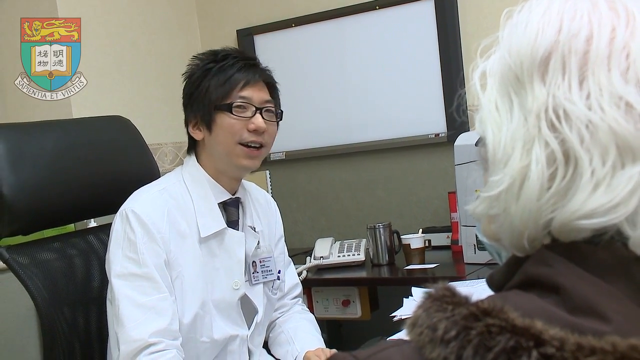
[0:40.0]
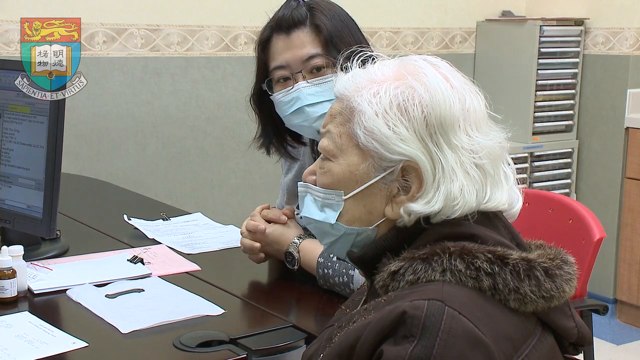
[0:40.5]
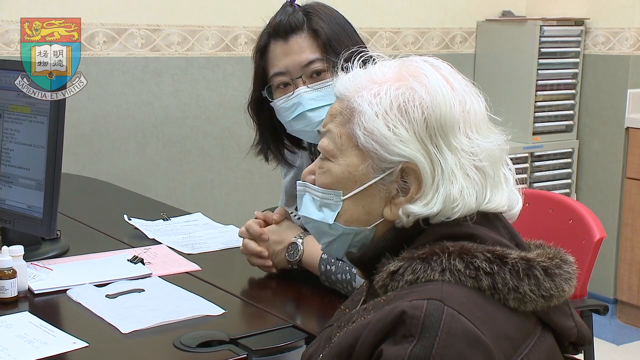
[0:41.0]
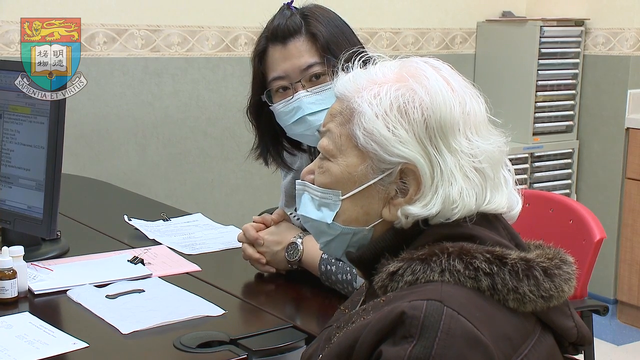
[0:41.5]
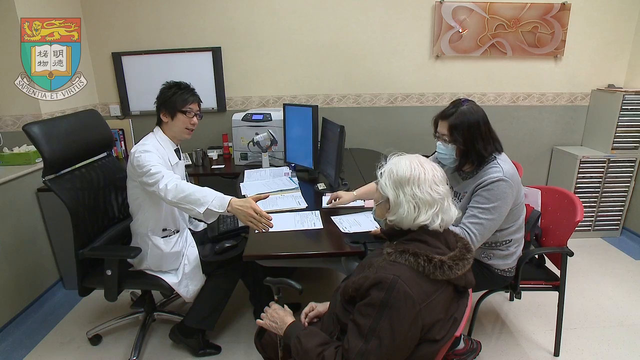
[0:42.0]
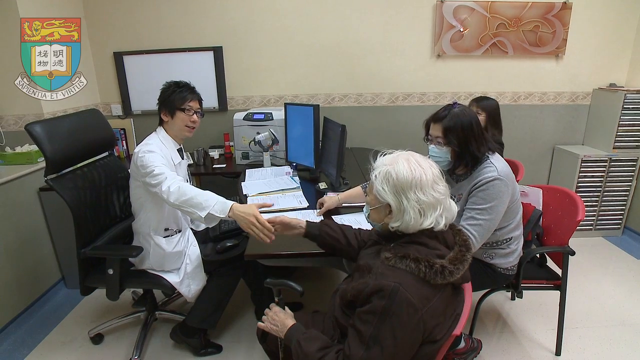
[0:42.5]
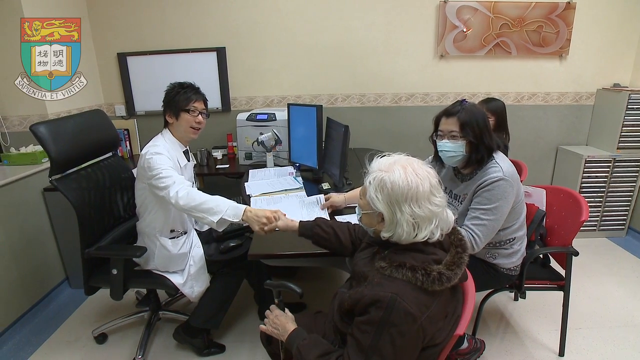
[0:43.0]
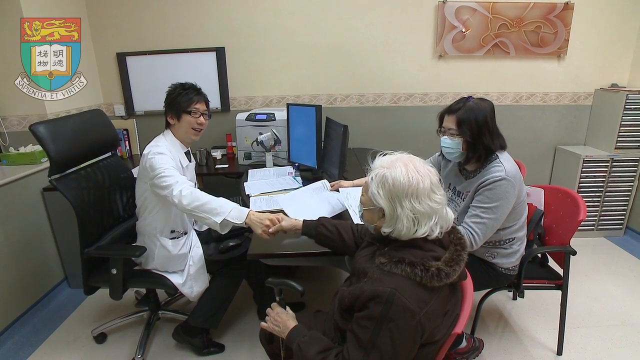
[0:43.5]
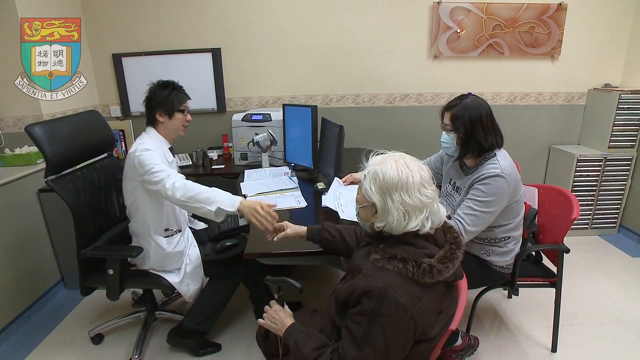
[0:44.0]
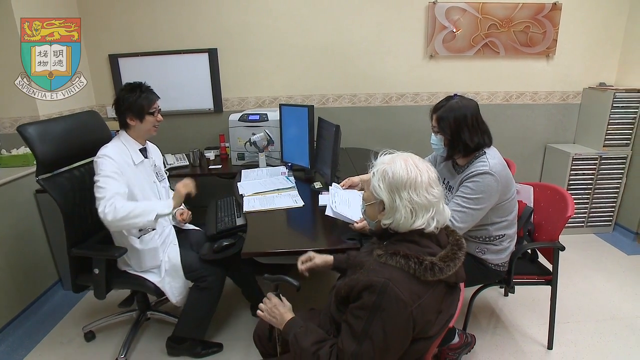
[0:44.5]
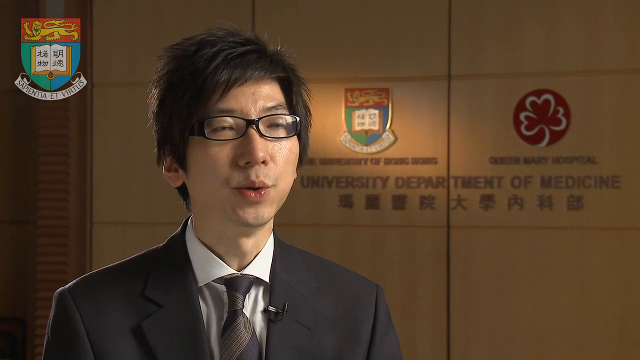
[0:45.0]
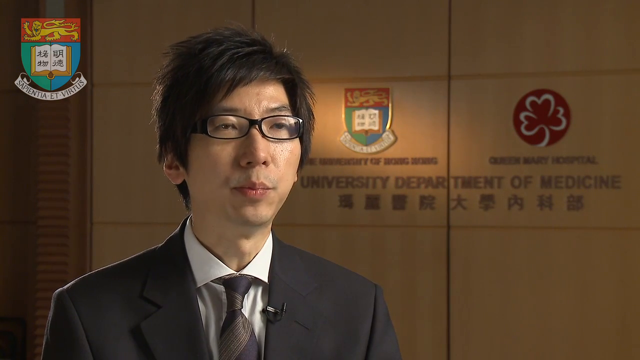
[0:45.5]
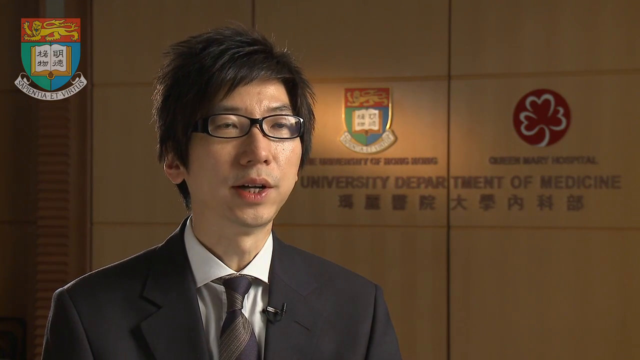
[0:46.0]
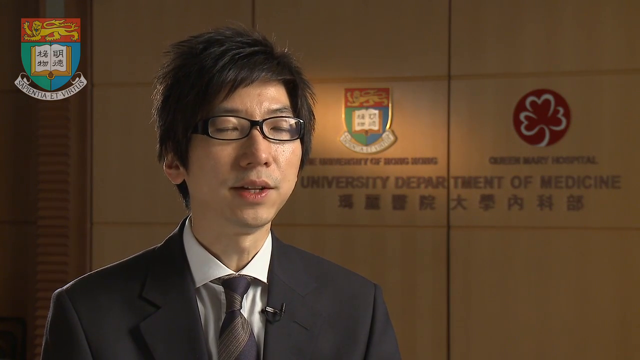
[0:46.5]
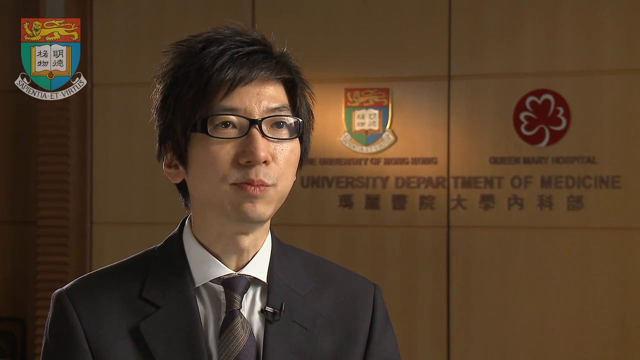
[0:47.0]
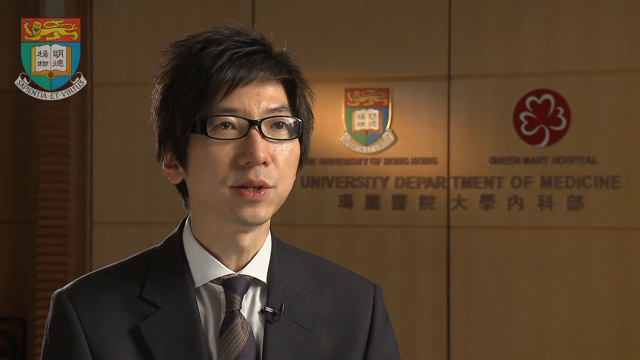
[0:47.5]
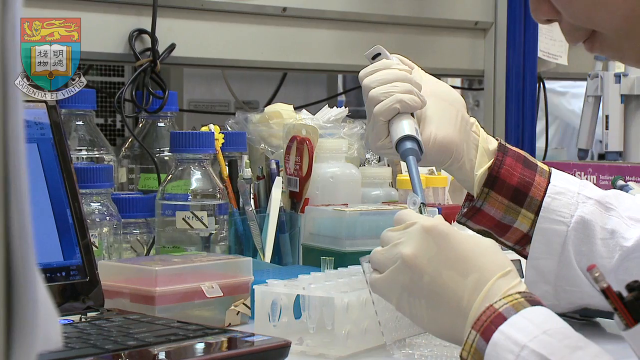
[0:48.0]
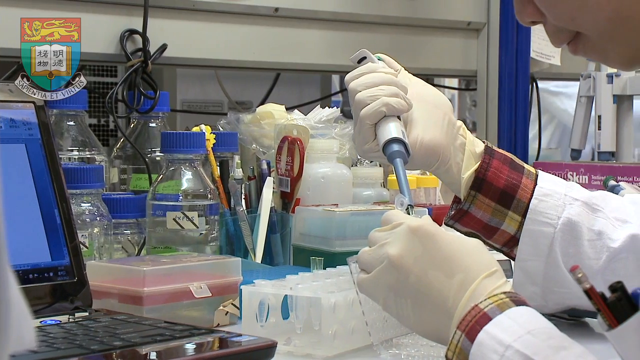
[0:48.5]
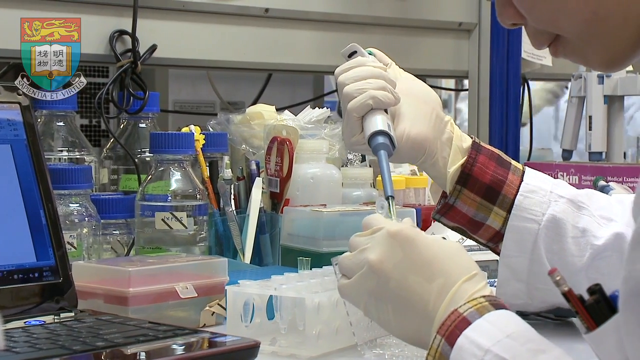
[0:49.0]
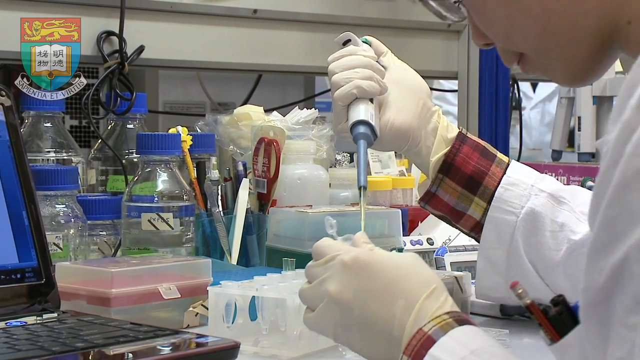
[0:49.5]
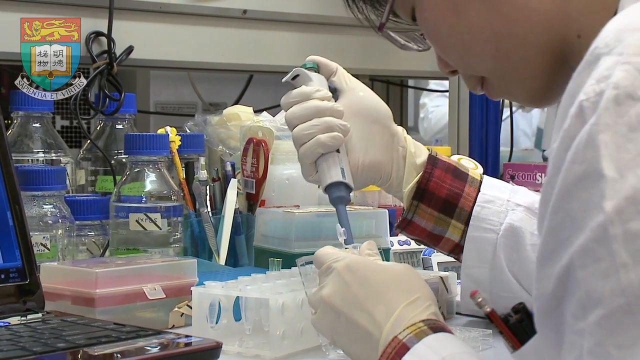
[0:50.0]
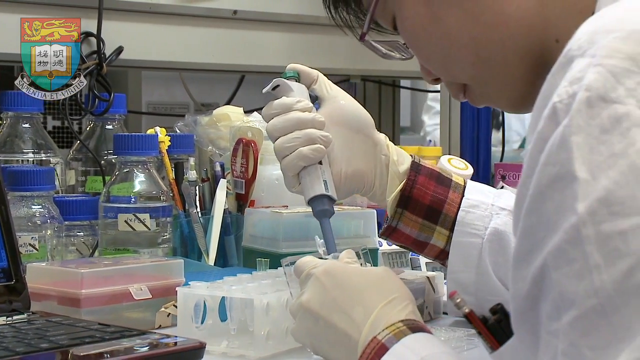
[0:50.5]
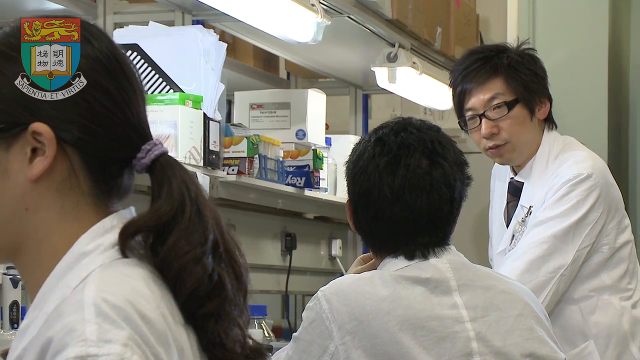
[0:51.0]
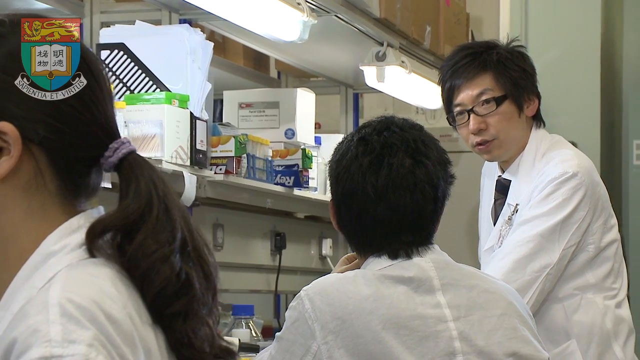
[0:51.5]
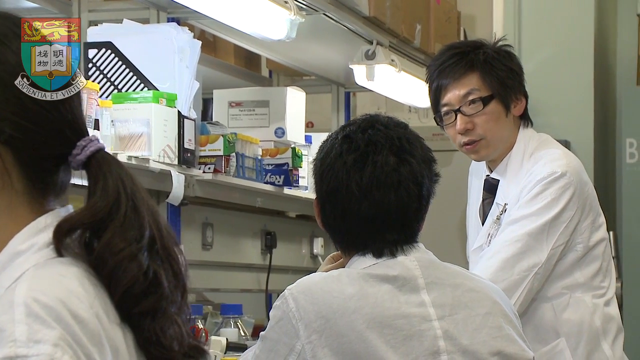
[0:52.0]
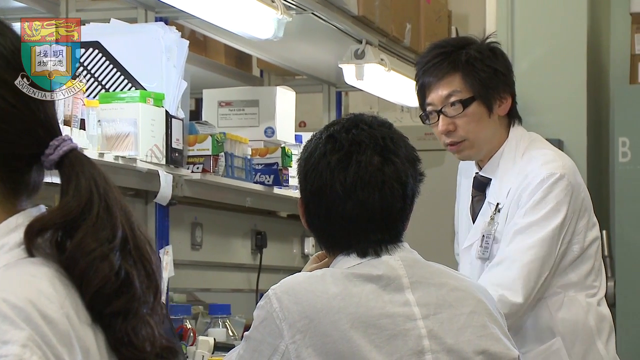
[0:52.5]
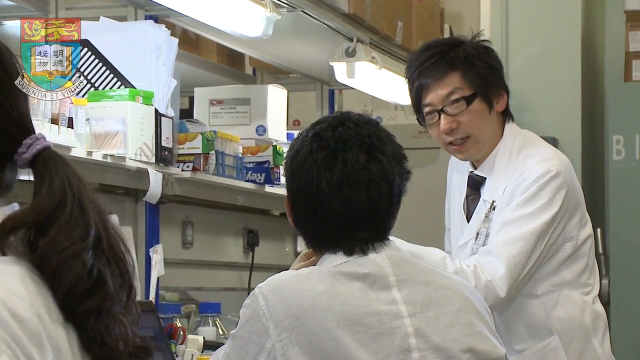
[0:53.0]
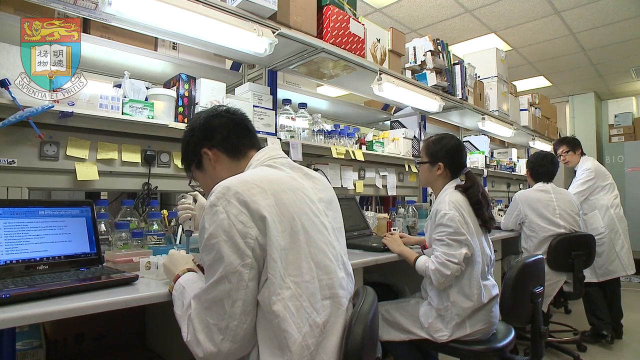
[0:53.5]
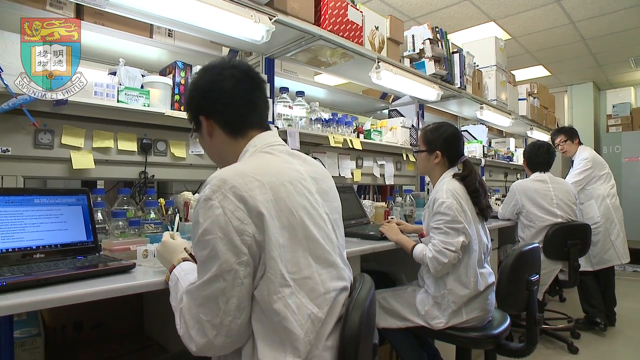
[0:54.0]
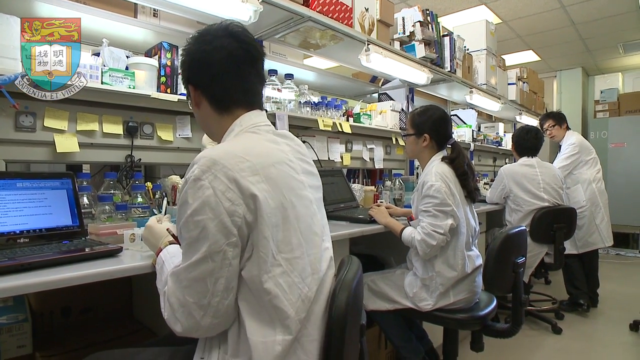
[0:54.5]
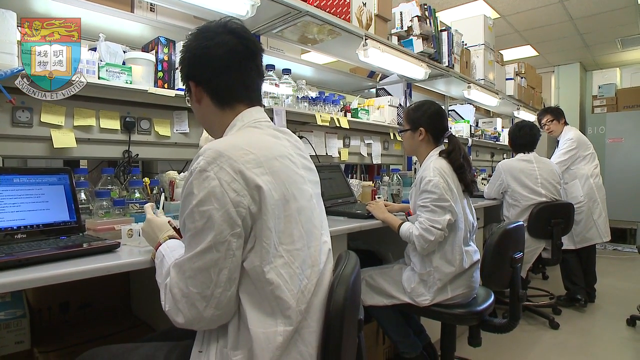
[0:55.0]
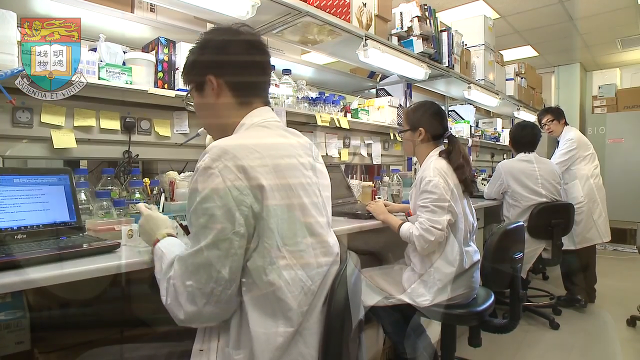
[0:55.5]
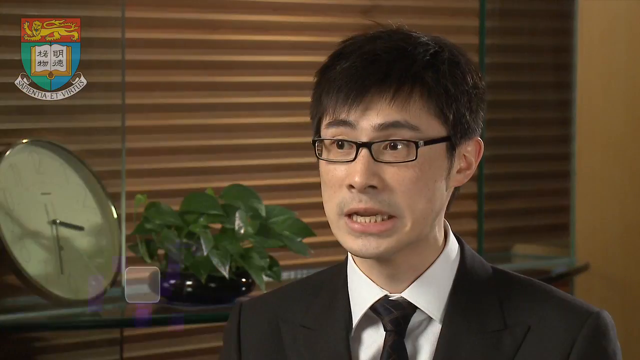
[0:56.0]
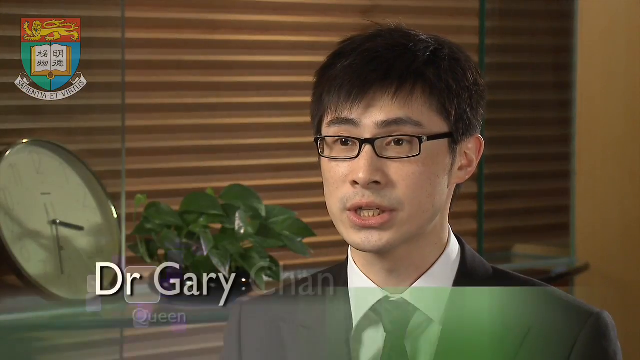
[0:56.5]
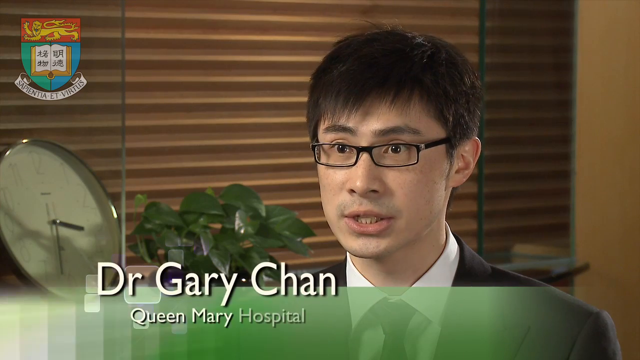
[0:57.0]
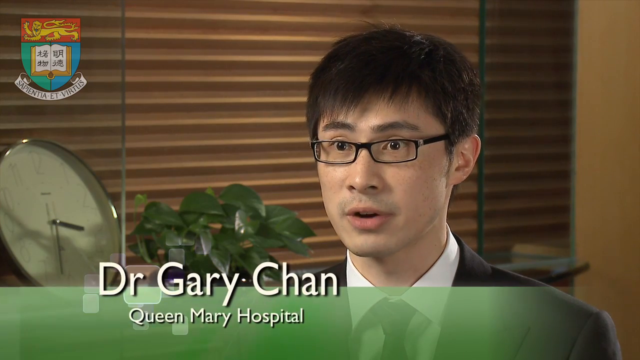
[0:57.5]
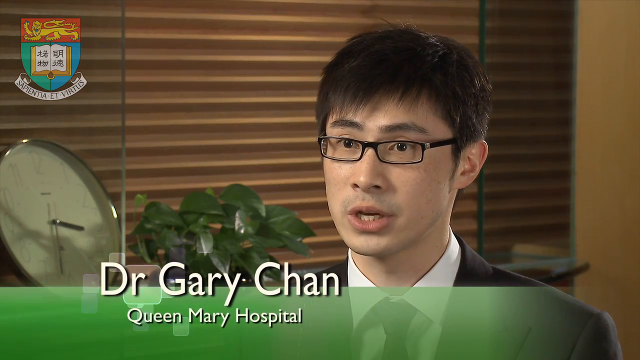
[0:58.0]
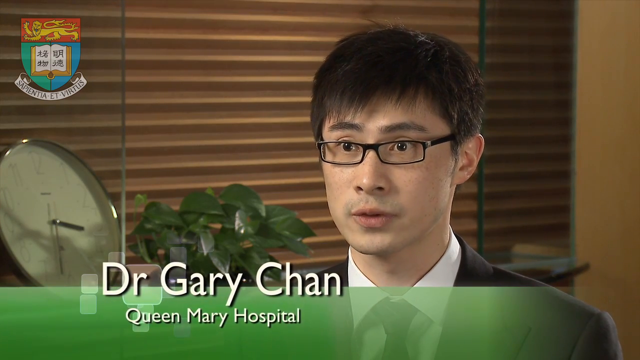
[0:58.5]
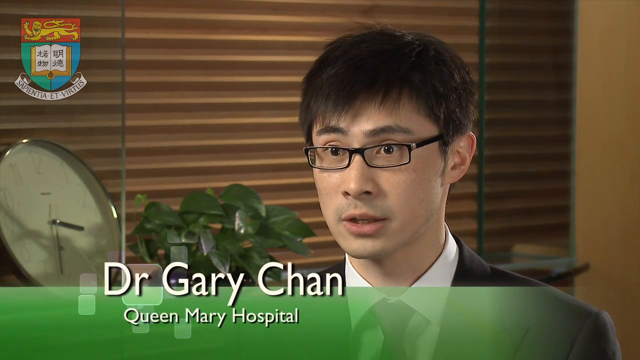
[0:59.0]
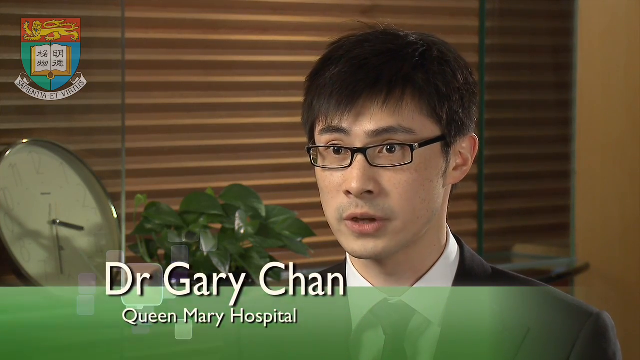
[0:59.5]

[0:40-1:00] Sidney C.W. Tang sits at a desk speaking to a small group of people: a young woman wearing glasses and an older woman wearing a brown coat, with a third woman in the back behind the two of them who is not seen clearly. Mr. Tang shakes the older woman's hand. The video then cuts to him sitting in front of the University Department of Medicine wall, speaking directly to the camera. Next, a person wearing a lab coat uses a syringe to put something into a tube. The shot pans further back to show several more people, including a woman with a short ponytail and another young man, with Mr. Tang in the back speaking to the young man. The camera pans back further, showing that all of these people are sitting at a long desk with computers and lab equipment, performing work tasks. The video then cuts to another young Asian man in a suit, also wearing glasses and with short, dark hair, speaking directly to the camera; he is identified as Dr. Gary Chan of Queen Mary Hospital.